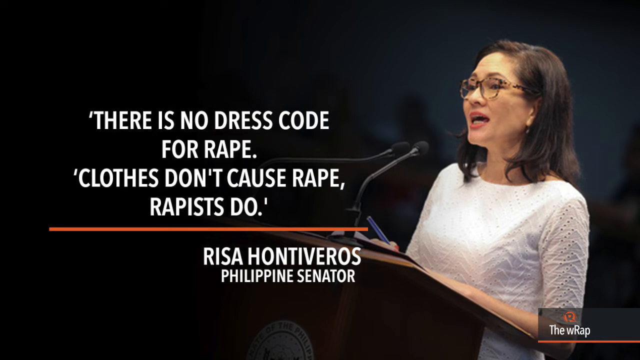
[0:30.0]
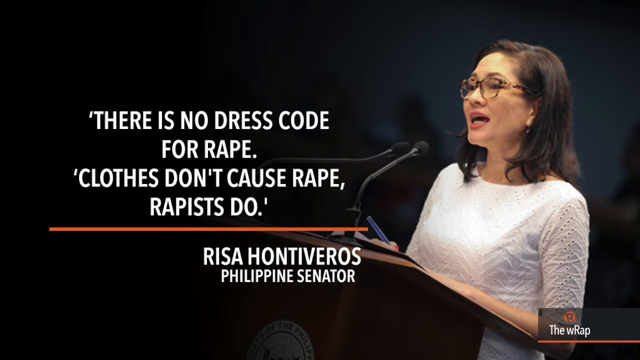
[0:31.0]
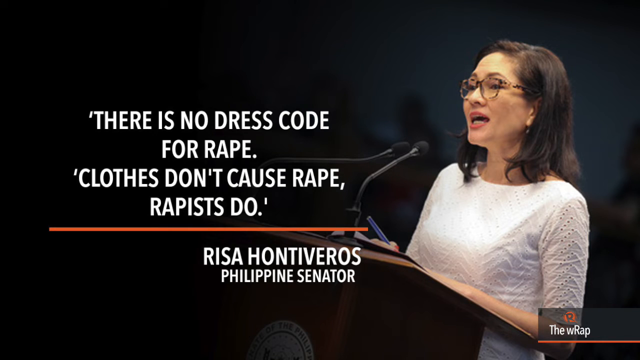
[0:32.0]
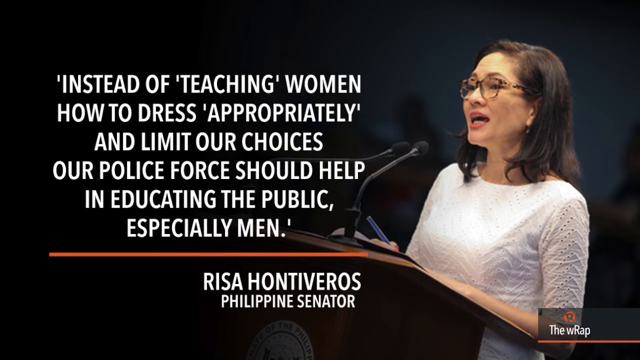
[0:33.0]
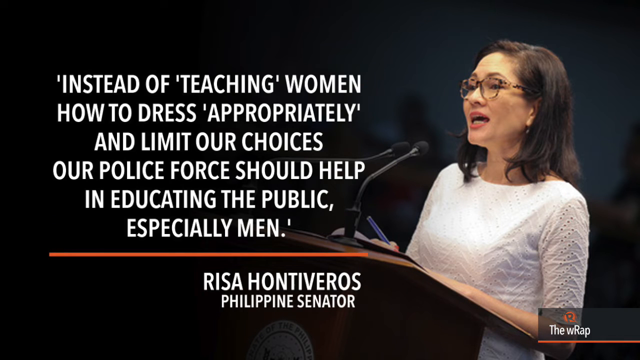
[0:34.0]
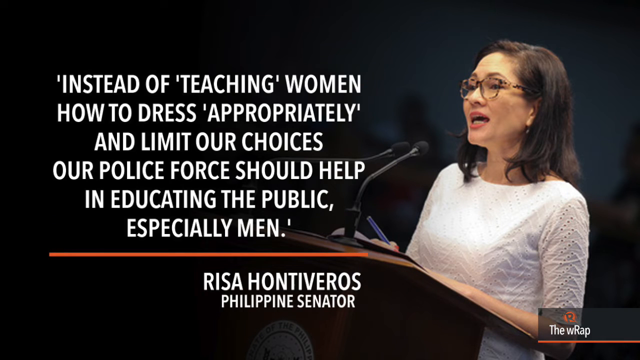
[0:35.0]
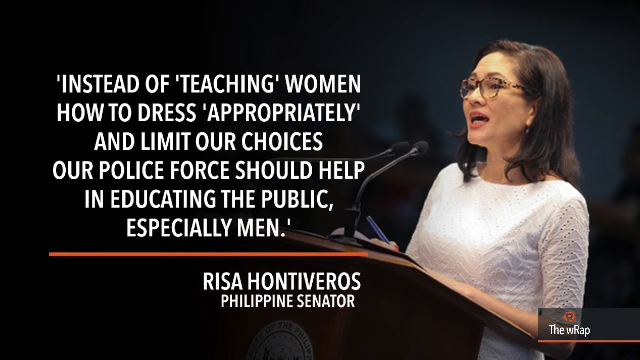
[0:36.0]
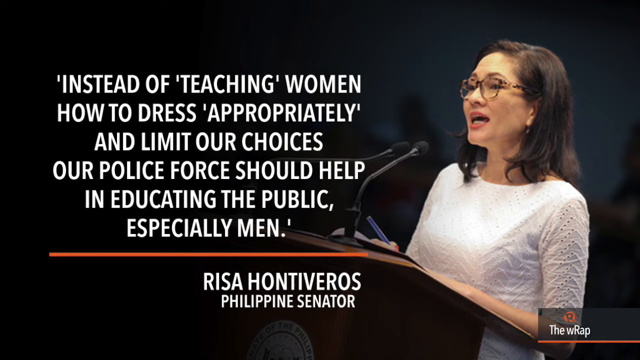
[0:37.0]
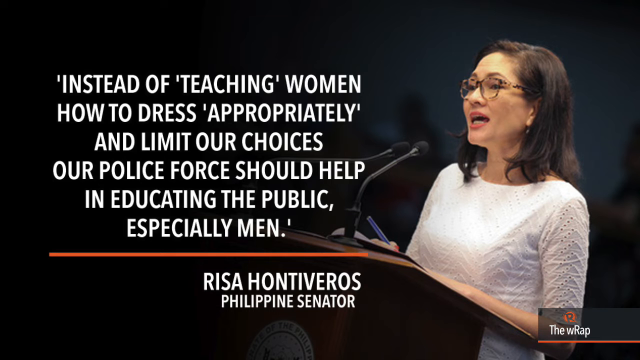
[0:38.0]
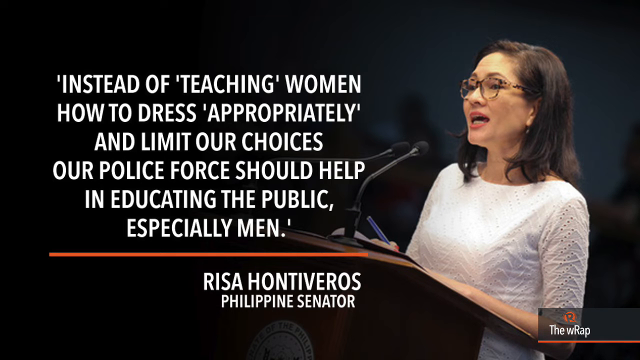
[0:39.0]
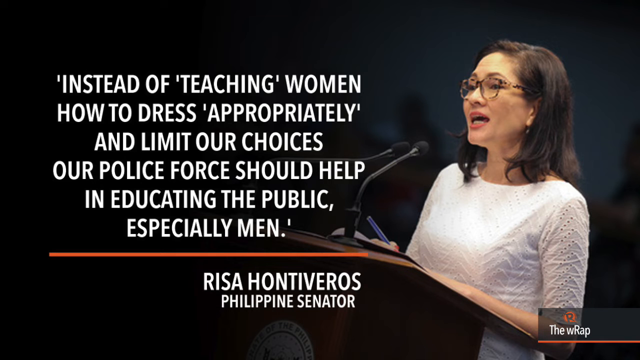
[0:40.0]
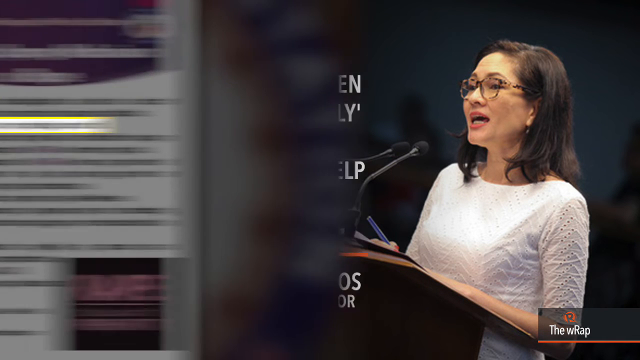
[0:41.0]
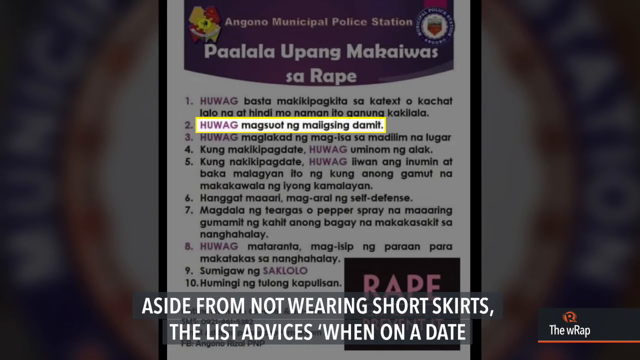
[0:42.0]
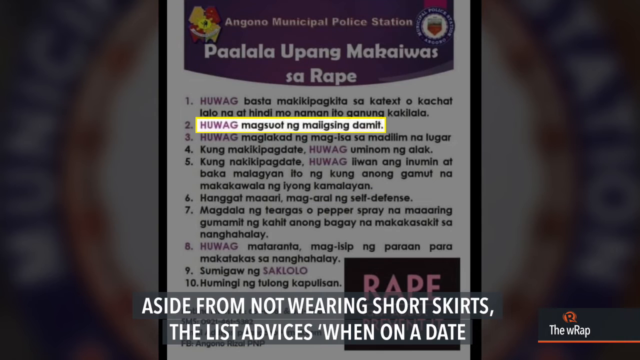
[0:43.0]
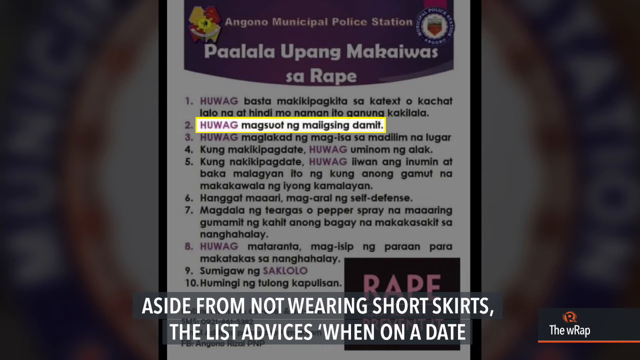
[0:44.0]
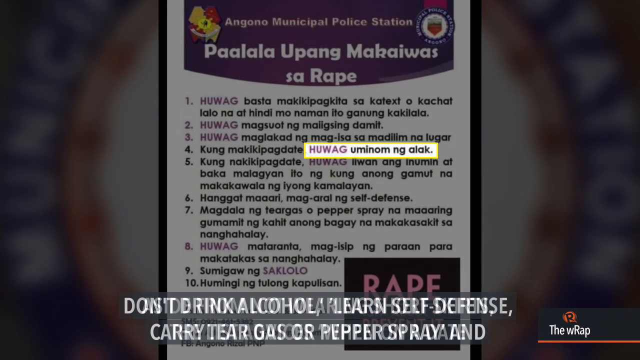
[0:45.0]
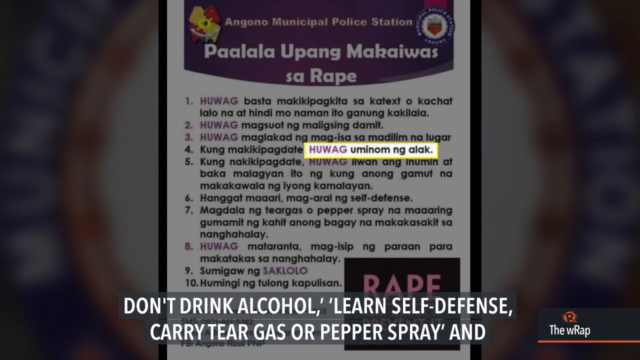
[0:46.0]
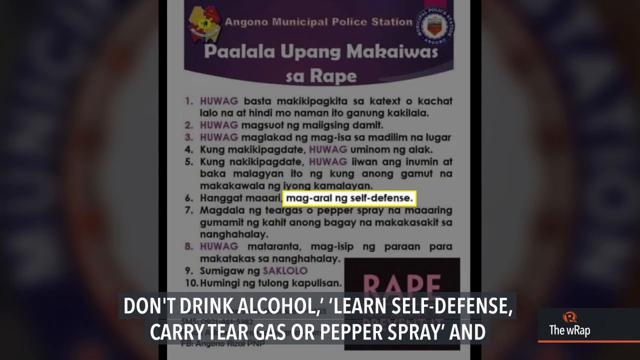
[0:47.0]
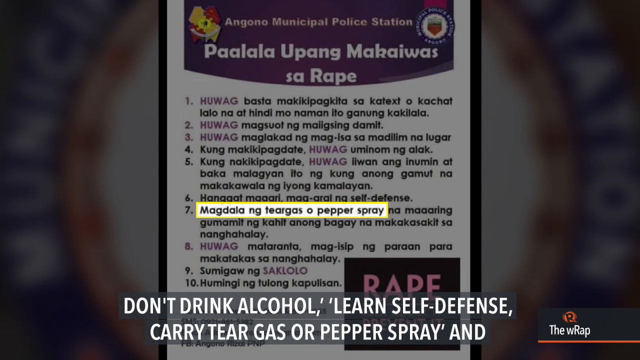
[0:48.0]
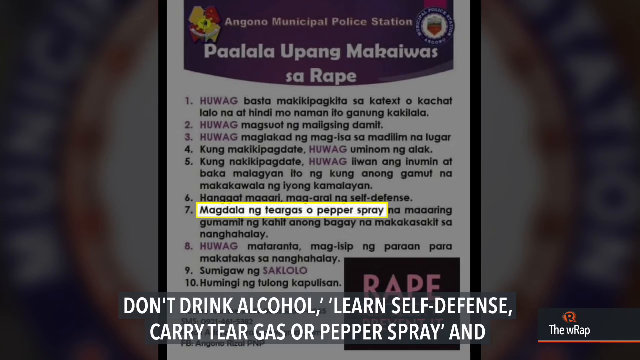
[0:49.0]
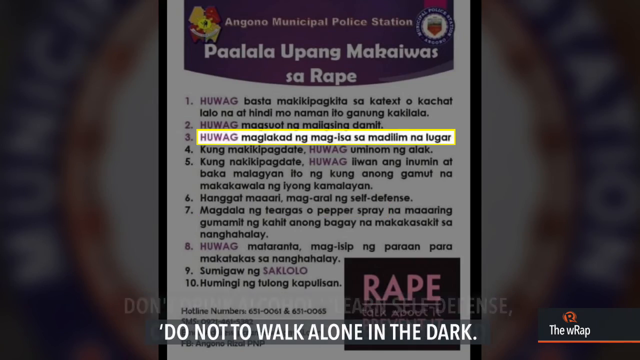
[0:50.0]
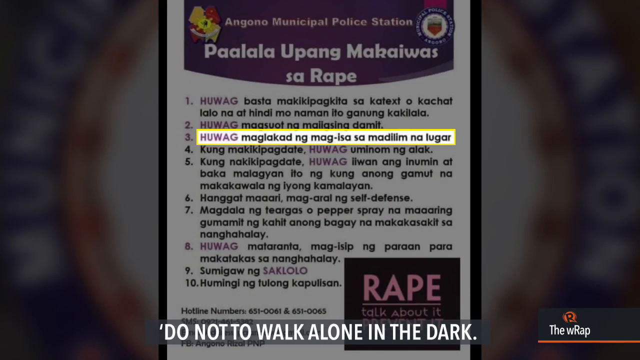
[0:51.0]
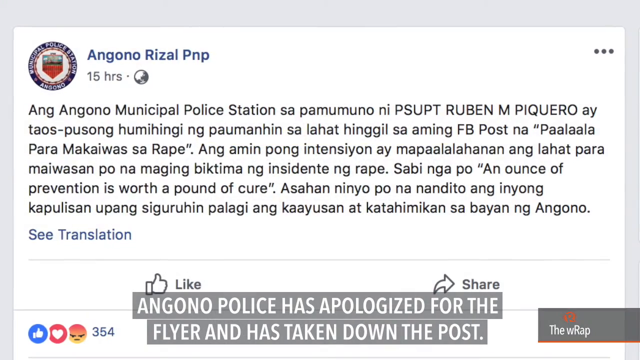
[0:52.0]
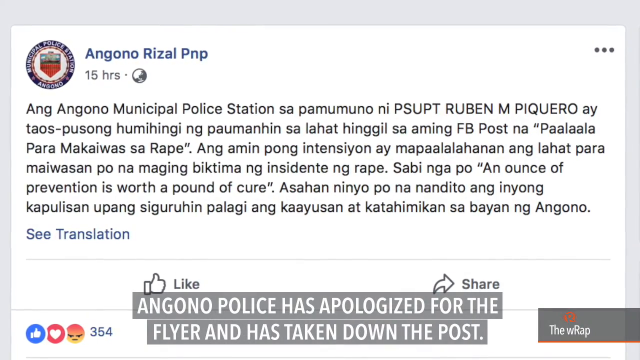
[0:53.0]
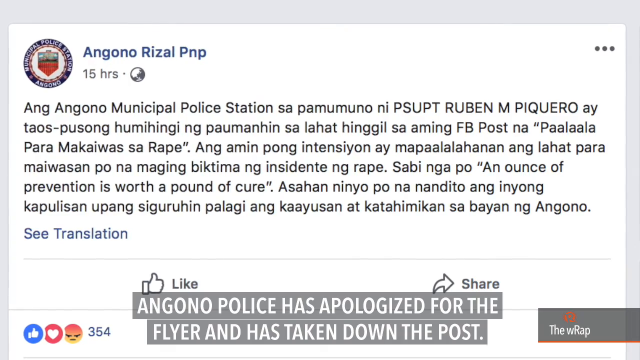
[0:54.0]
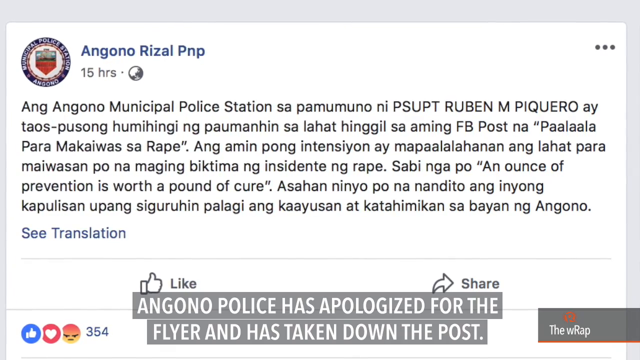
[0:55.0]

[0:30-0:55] A picture shows a man wearing a white long-sleeved shirt, with a caption; this man is a Philippine senator. Text on screen reads "Instead of teaching women how to dress appropriately and limit our choices, our policemen should help in educating the public, especially men." A paper with sheets is shown, with different parts of the text on the page highlighted. Another caption at the bottom of the screen reads "aside from not wearing short skirts, please advise when on a date. Do not drink alcohol". Another post appears, written in a different language, with an option to see the translation.